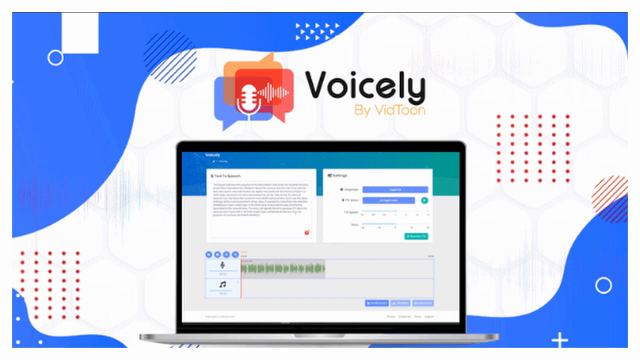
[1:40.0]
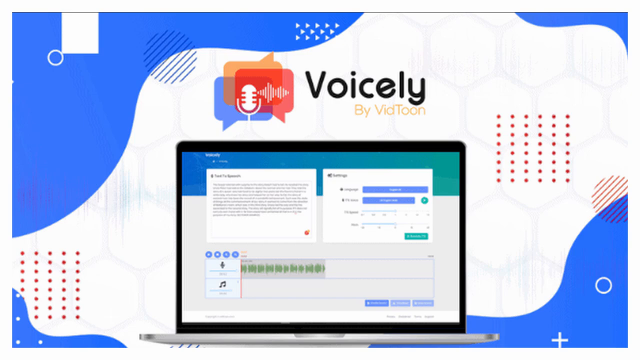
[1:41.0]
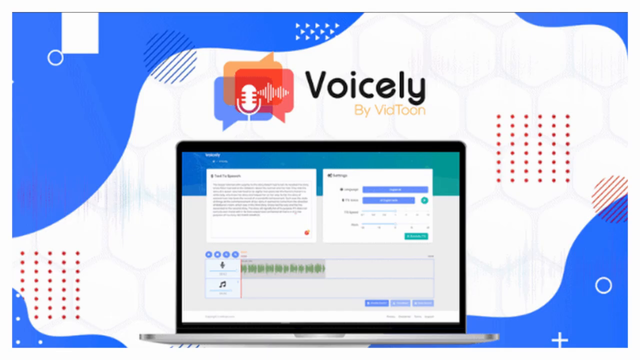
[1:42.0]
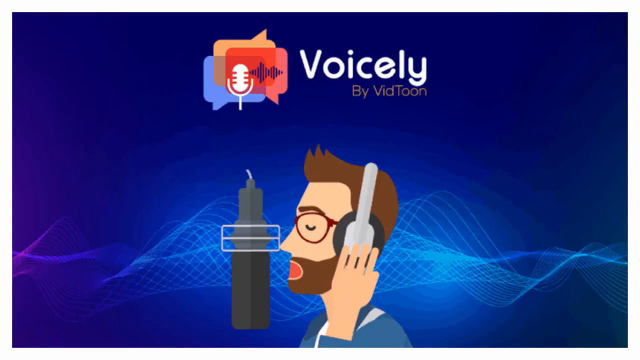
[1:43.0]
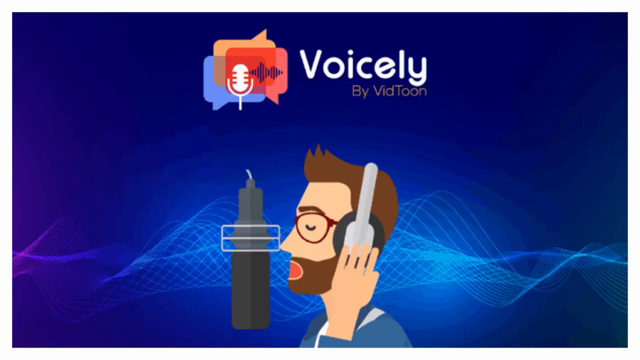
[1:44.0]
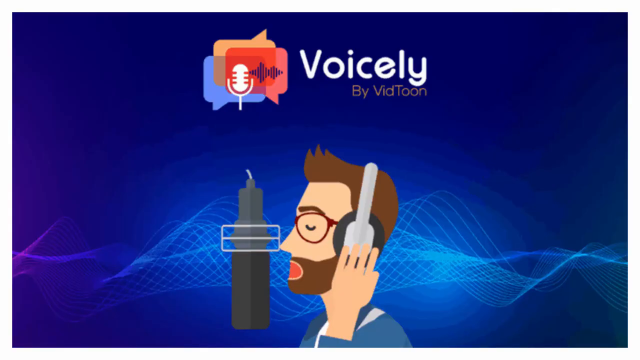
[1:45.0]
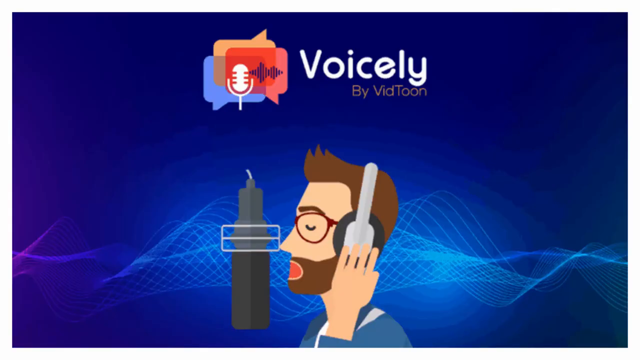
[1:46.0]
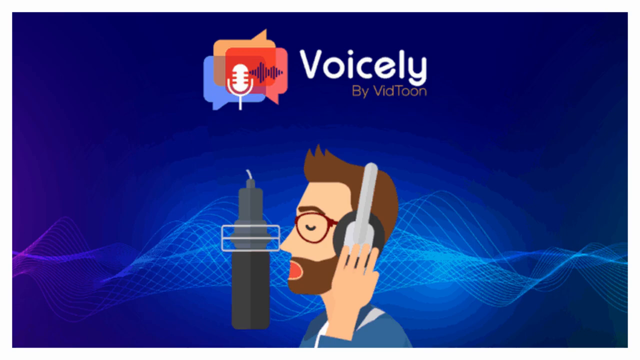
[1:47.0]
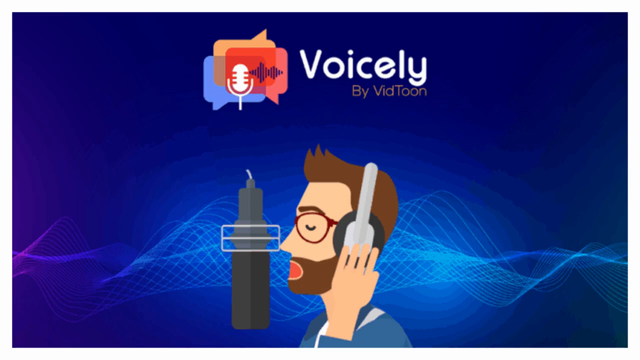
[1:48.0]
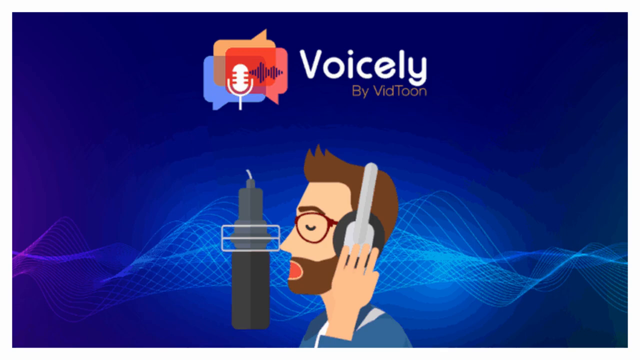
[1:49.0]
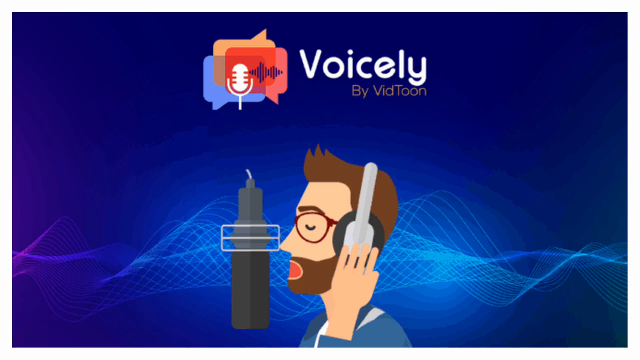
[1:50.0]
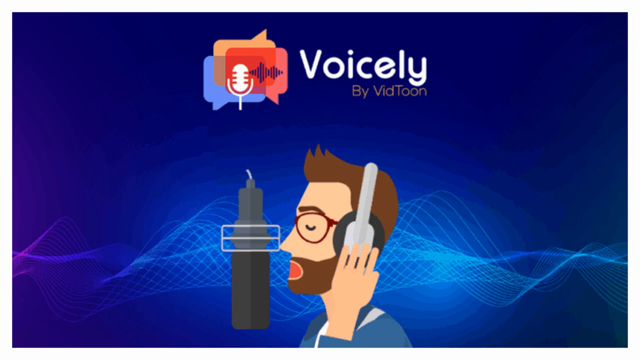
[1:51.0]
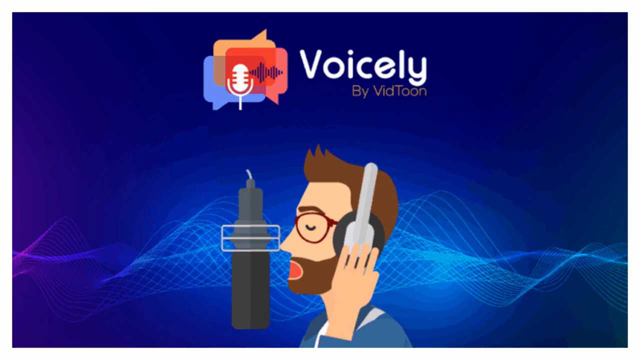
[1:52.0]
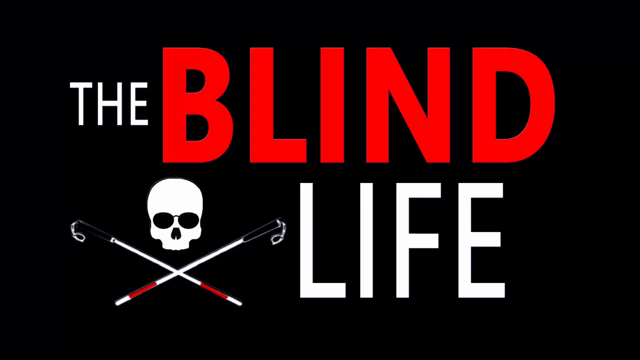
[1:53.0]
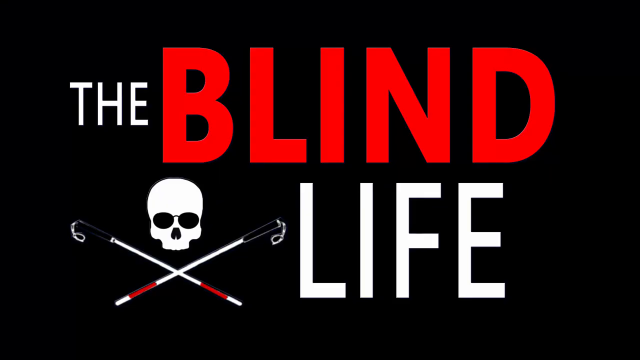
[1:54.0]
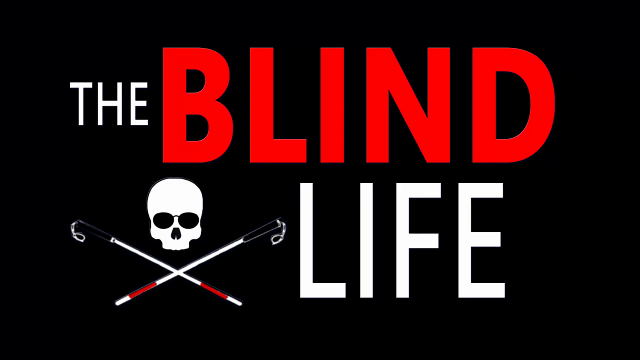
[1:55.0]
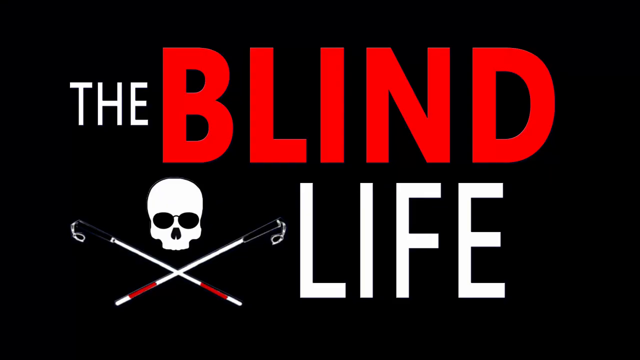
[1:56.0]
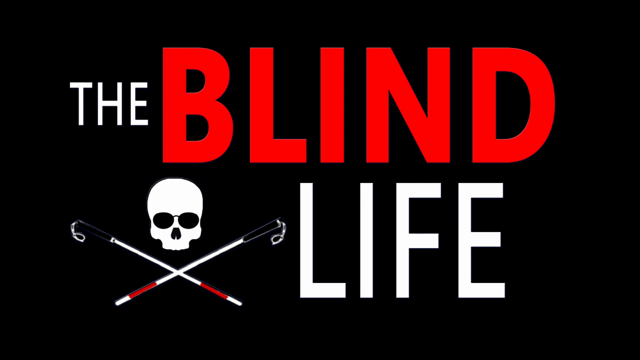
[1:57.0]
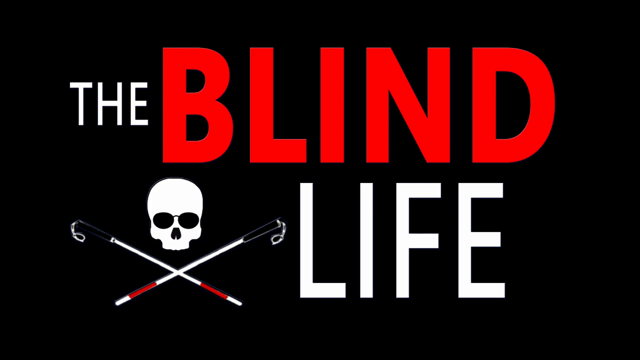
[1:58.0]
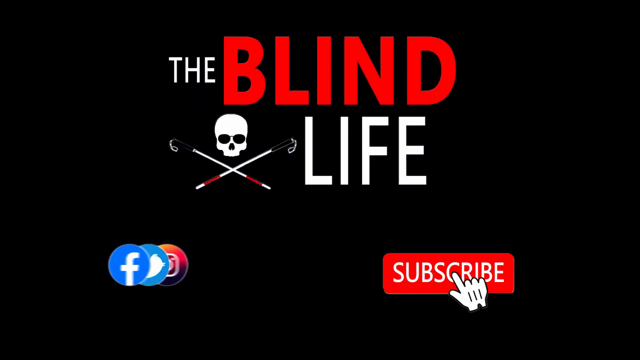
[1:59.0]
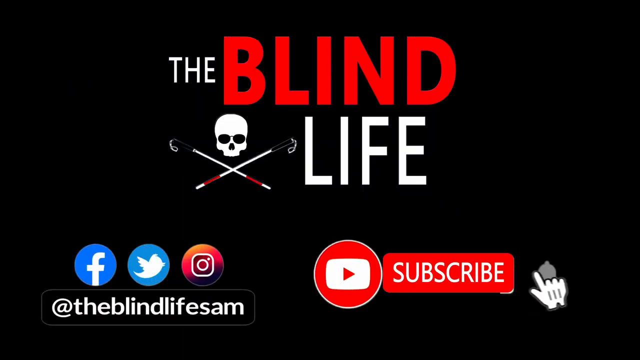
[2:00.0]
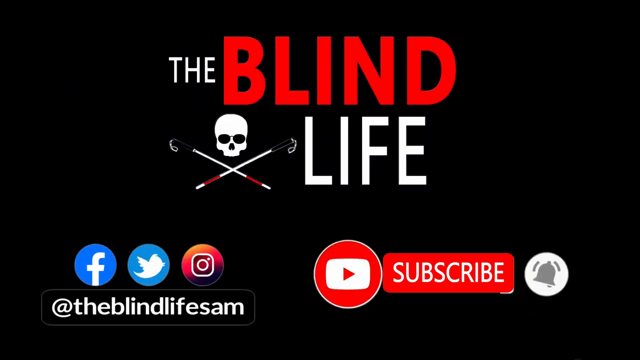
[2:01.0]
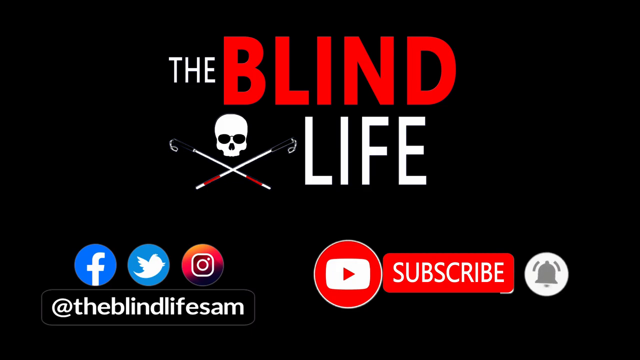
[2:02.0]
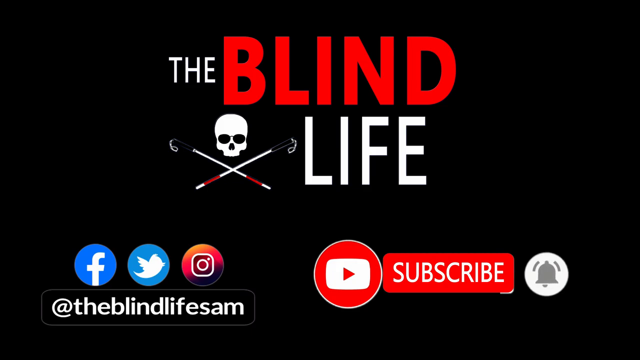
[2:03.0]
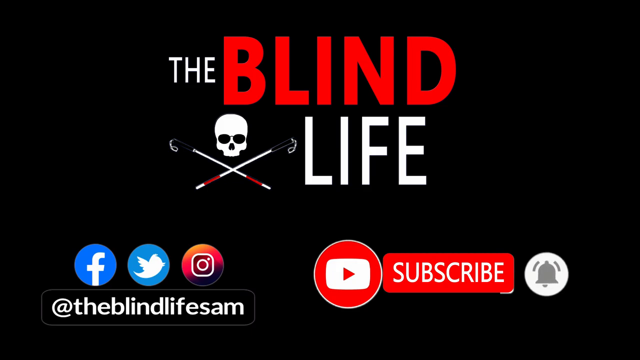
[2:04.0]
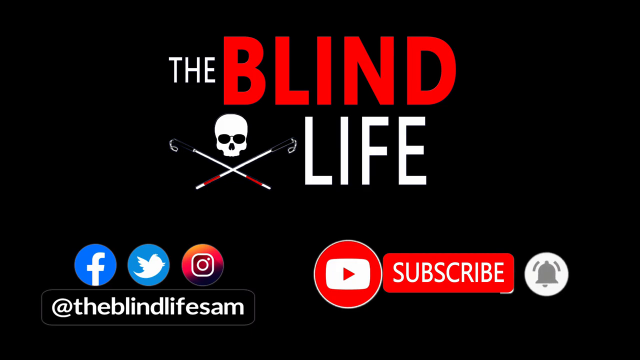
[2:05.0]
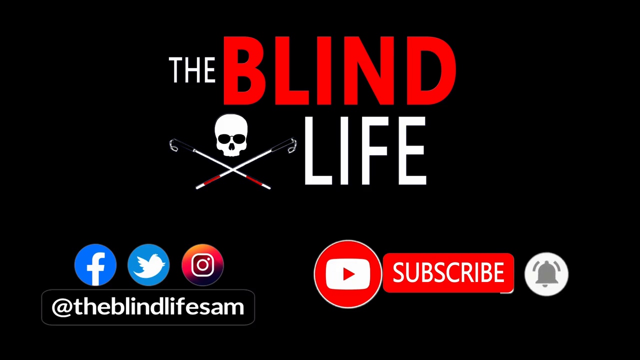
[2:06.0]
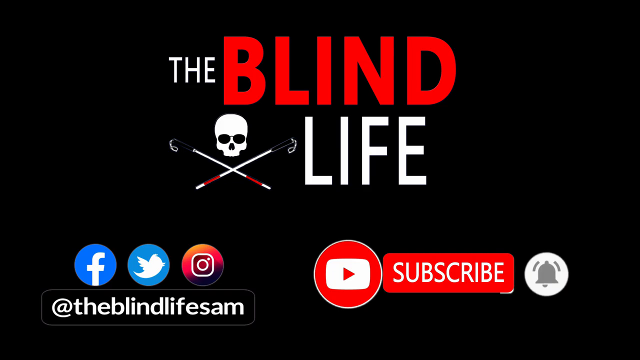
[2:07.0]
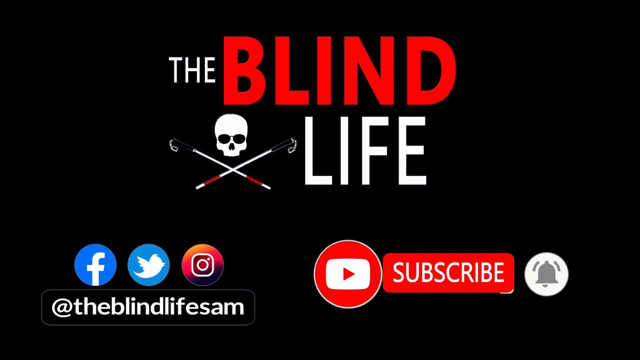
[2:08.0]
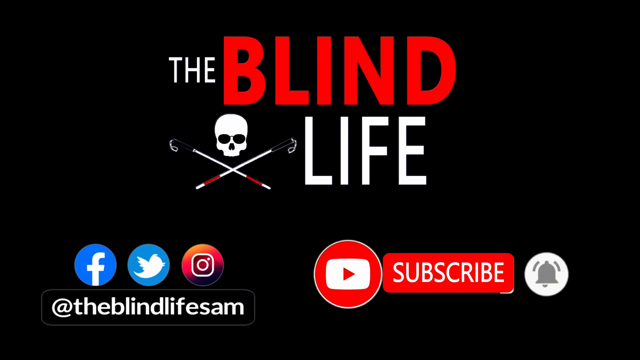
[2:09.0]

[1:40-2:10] The view returns to the cartoon-like image of a man speaking into a microphone and holding the headphones he is wearing, under the Voicely by VidTune logo. This sits on the screen for a long time. The Blind Life logo then returns, filling the whole screen, with a skull and crossbones formed by the canes used by people with visual impairments. The logo shrinks to the top half of the screen, and three social media buttons appear: Facebook, Twitter and Instagram. Over on the right-hand side of the screen is a Subscribe button, with a YouTube logo next to it. At the bottom left of the screen is a caption with a social media address, "@blindlifesam". A cursor in the shape of a fist moves across the screen and clicks the bell icon next to Subscribe.